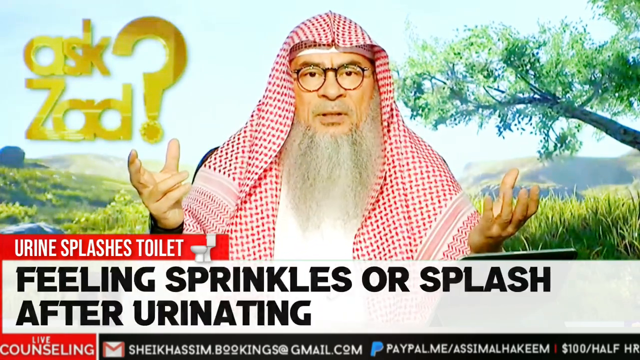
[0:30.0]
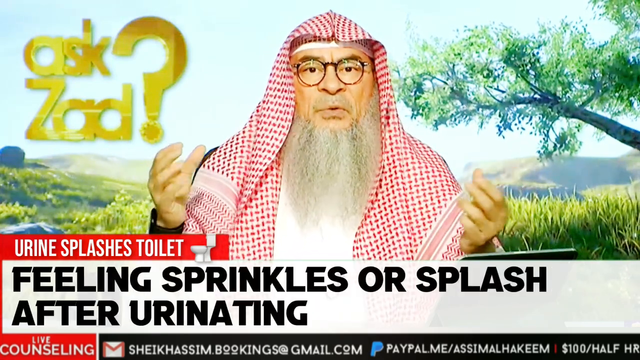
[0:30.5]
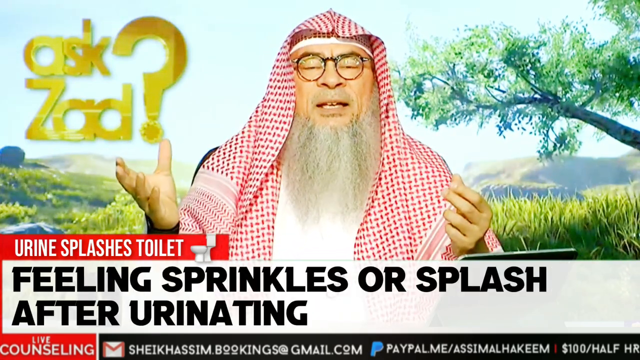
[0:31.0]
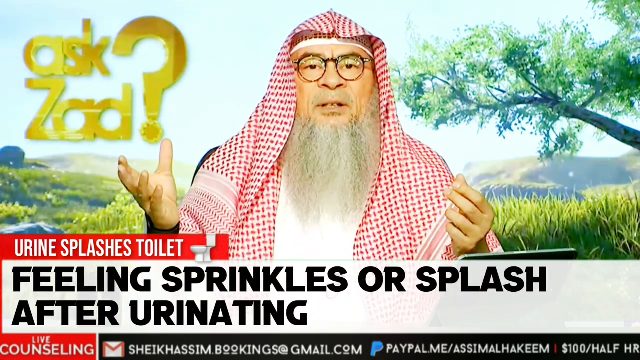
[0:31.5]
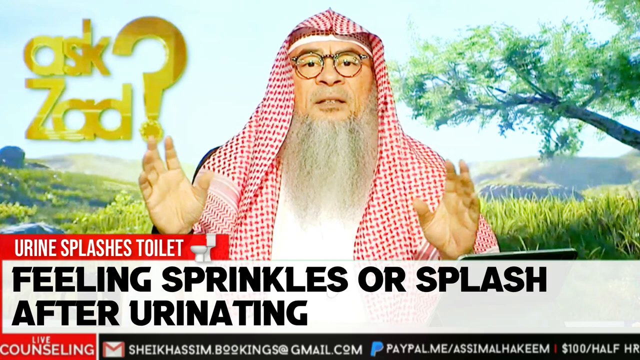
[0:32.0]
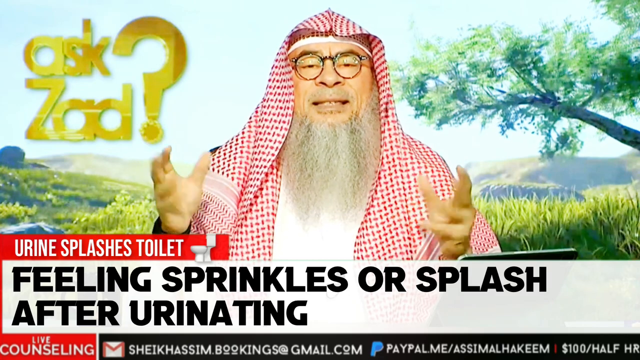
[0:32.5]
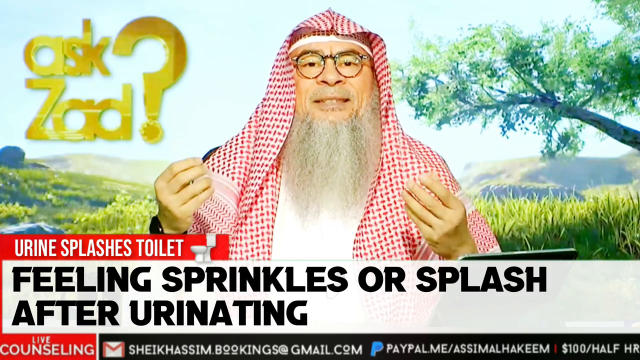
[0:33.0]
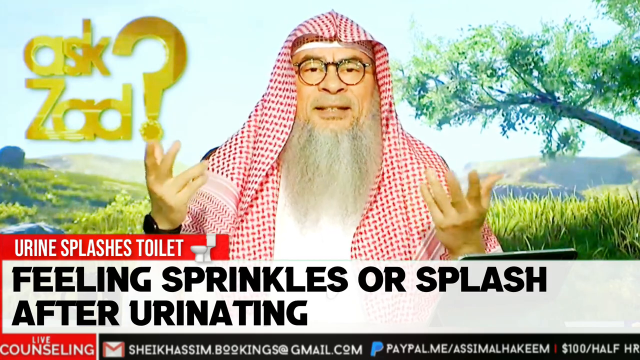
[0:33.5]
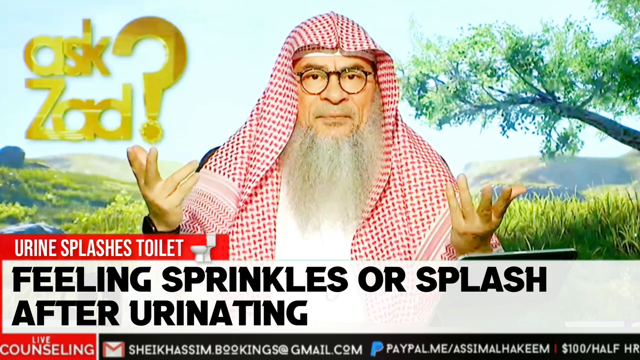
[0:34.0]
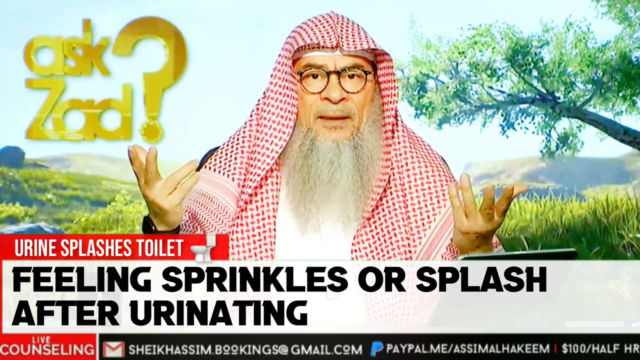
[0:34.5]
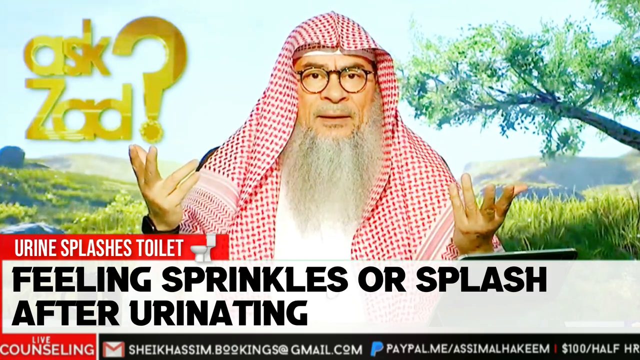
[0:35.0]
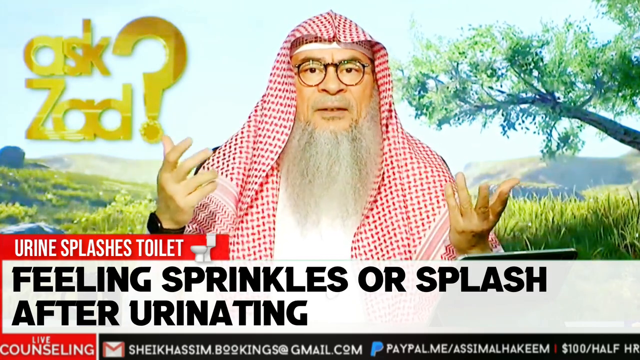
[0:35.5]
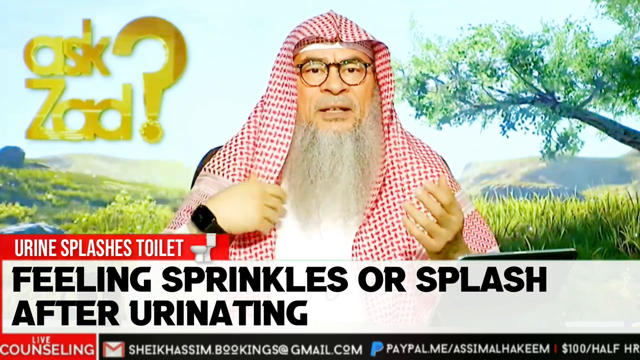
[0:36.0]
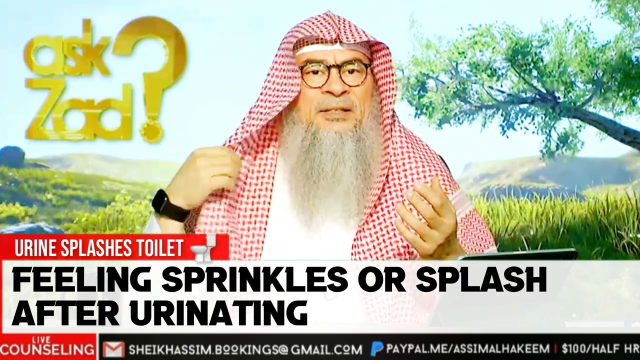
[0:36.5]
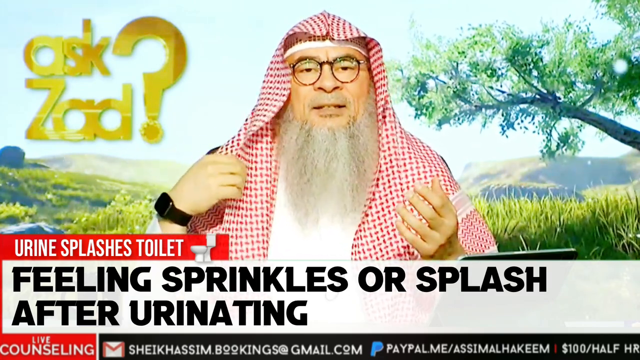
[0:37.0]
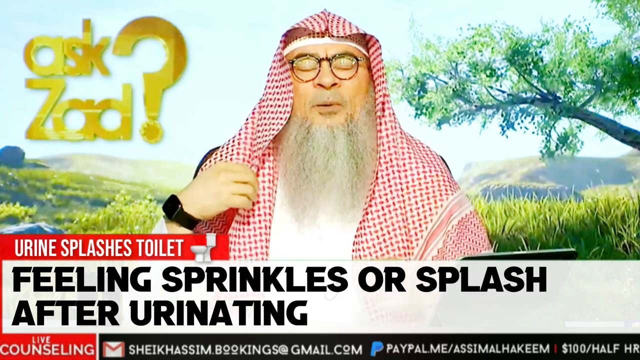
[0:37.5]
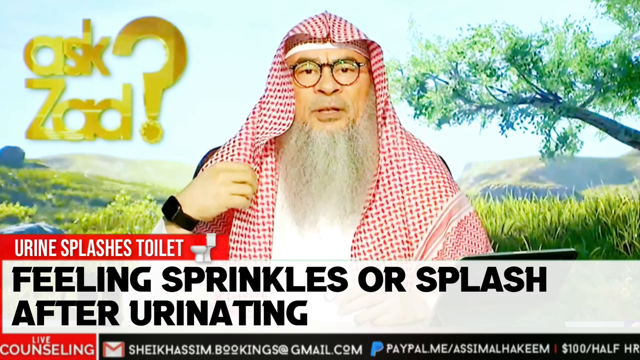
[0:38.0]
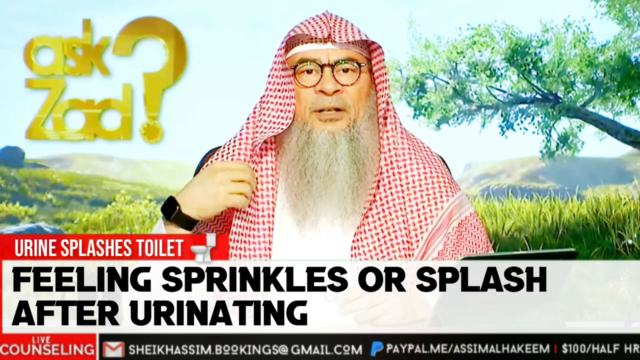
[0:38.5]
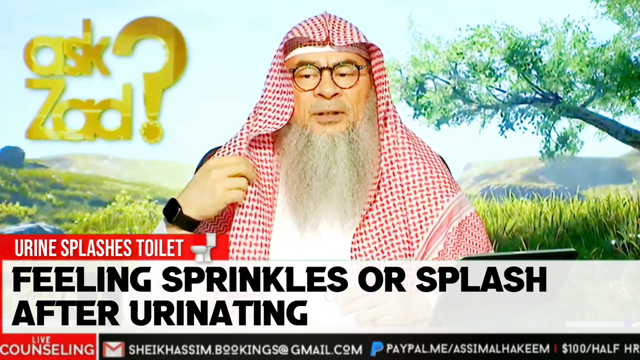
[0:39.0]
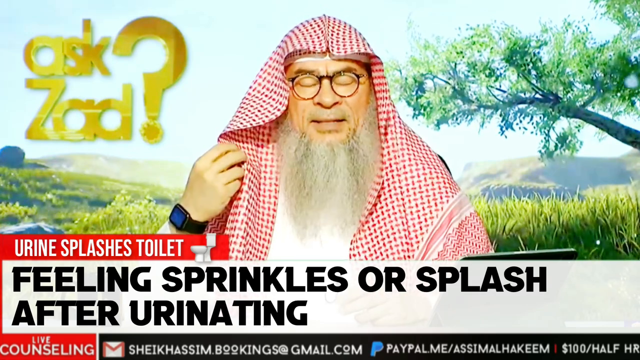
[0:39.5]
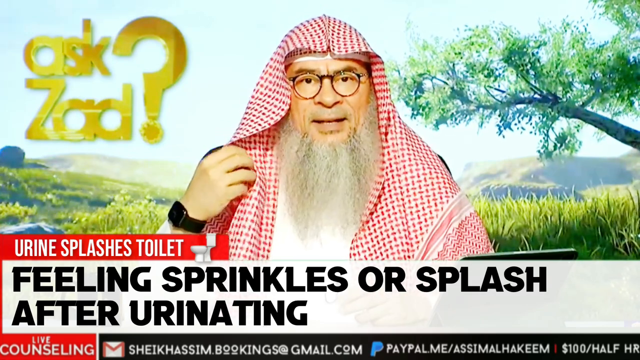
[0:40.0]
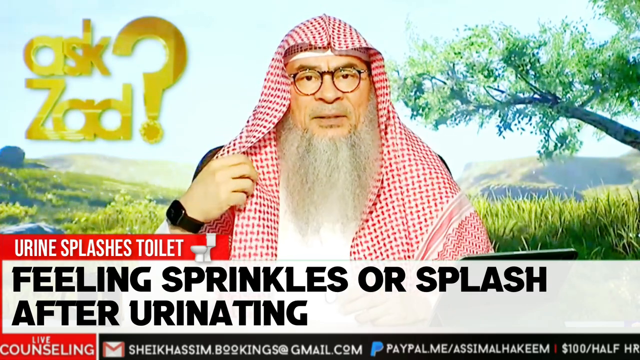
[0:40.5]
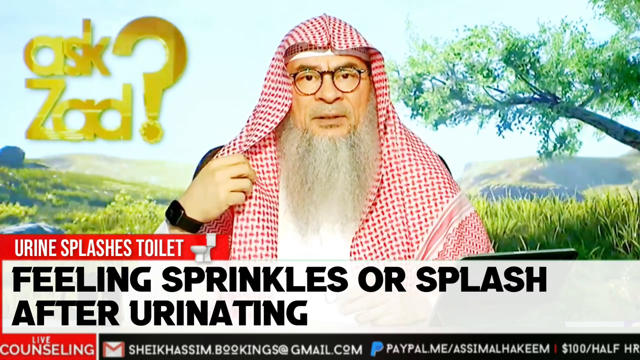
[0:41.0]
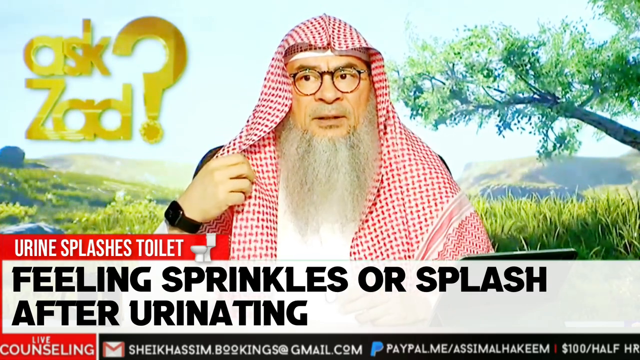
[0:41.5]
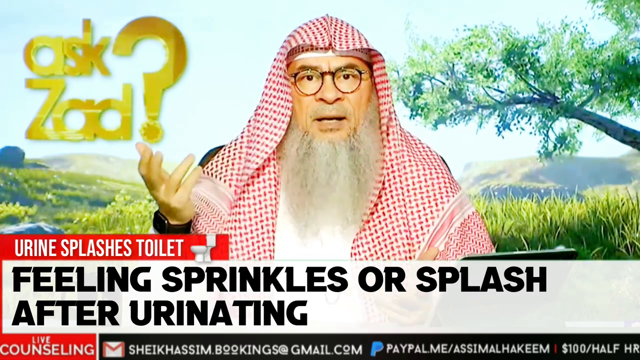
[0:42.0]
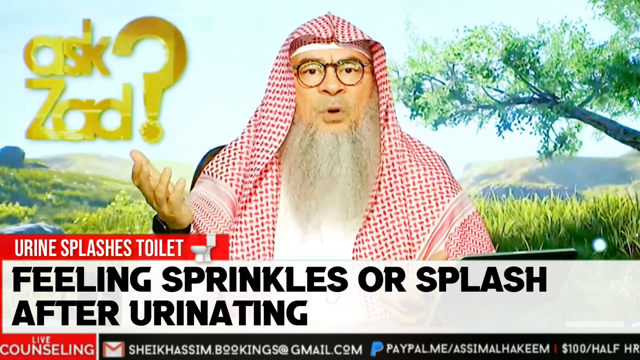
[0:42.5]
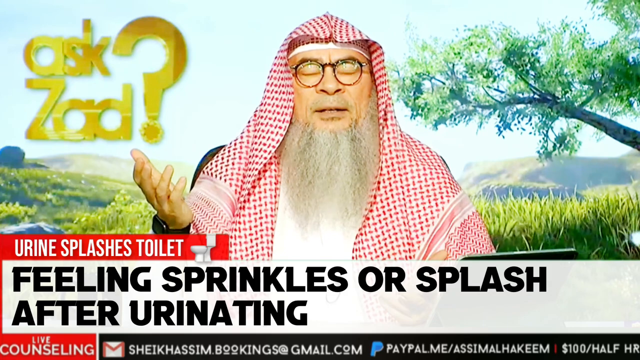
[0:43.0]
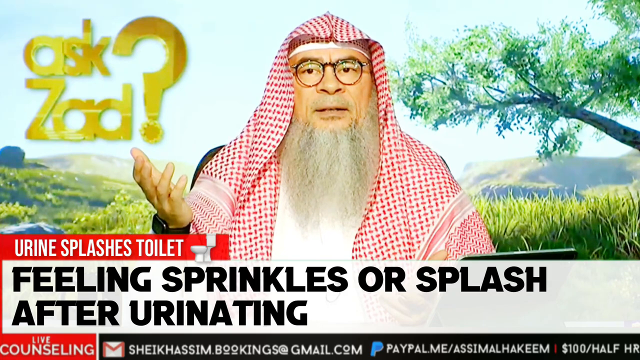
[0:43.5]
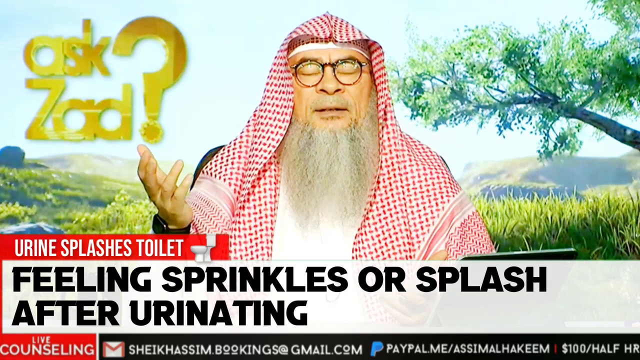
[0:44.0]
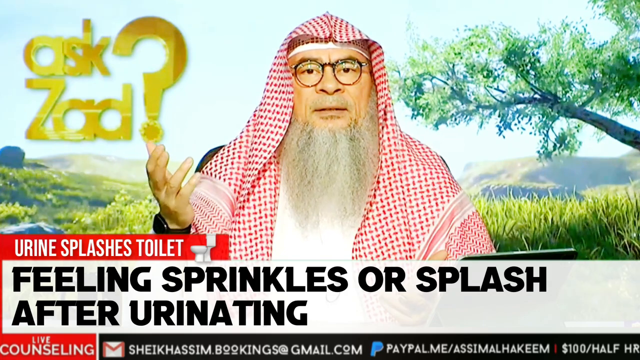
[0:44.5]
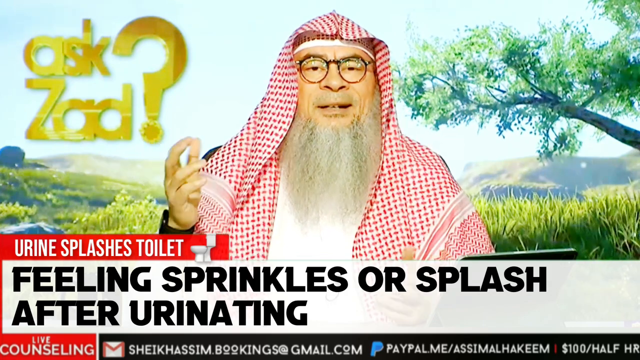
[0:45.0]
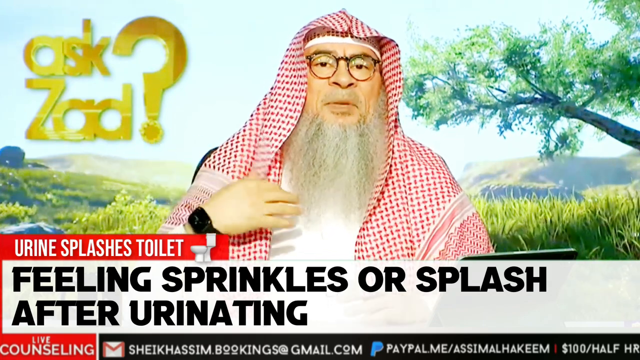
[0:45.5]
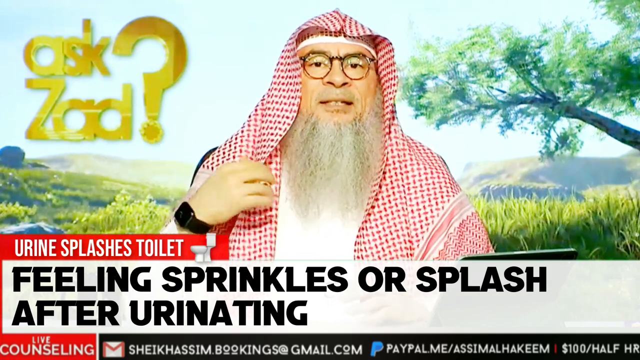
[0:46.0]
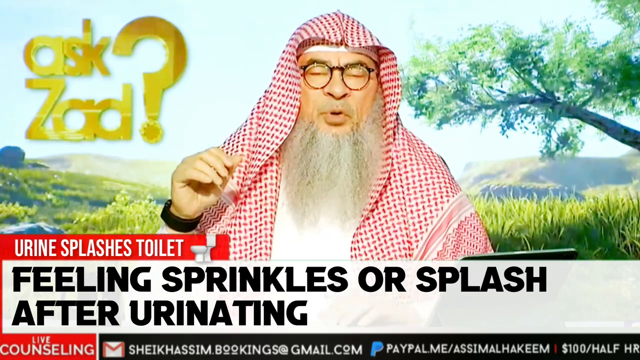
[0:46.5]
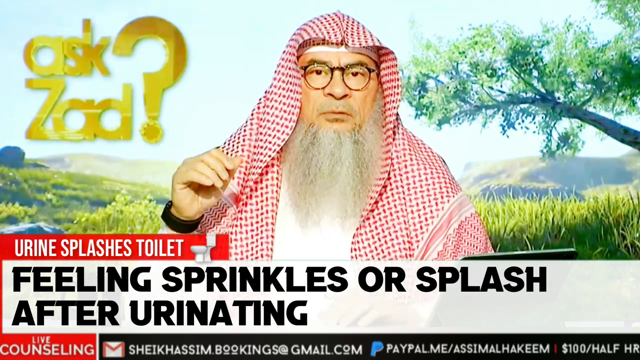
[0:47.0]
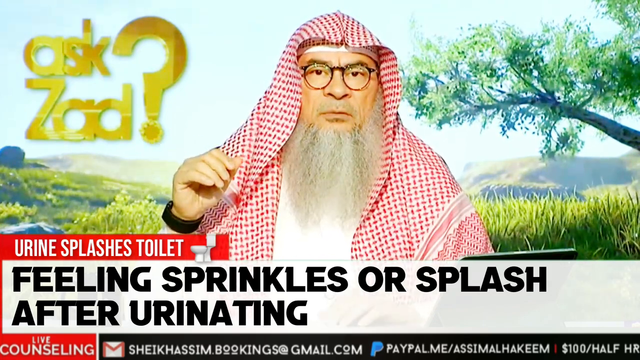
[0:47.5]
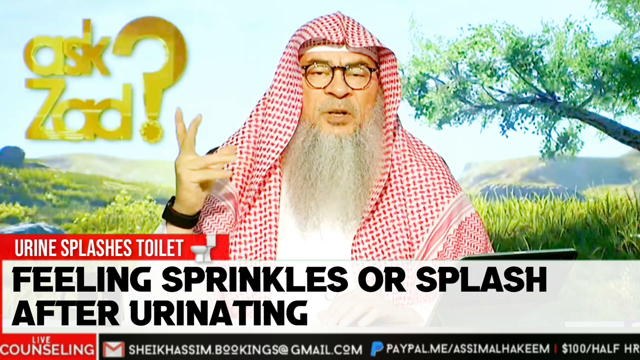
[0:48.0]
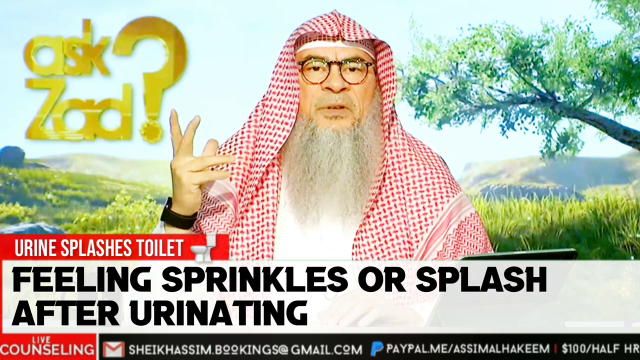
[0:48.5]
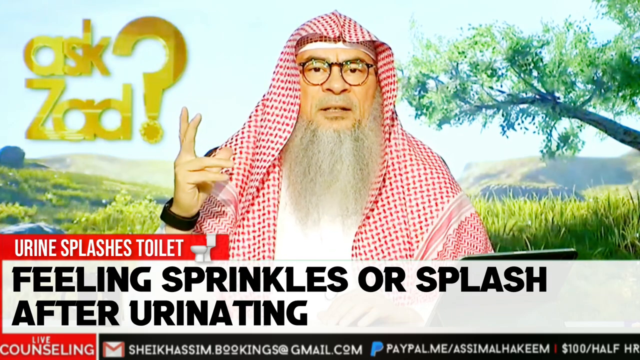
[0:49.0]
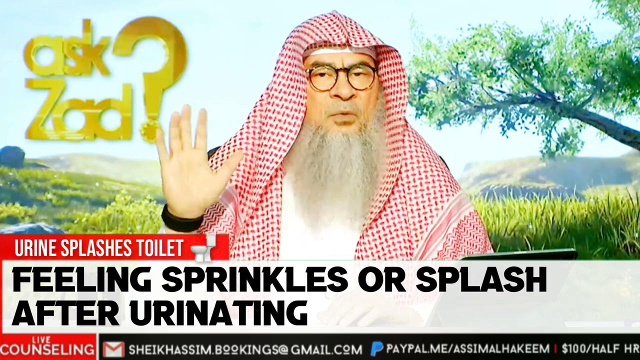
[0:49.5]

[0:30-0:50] The Sheik is talking. He has round-rimmed glasses, holds both hands up, and wears a black wristwatch. His beard goes down quite a bit, probably four to five inches long. He tugs on one side of his head covering and talks as if explaining something, with small head nods and hand gestures. The "ask Zad" sign is visible closer up; it is gold with a mirror reflection. The background is an image rather than real, and it is very bright, so it looks as though he is sitting in the sun. The caption shows up again at the bottom of the screen: "The urine splashes toilet, feeling sprinkles or splash after urinating." The chair he is sitting on looks dark, with a little darkness visible at each corner. The edge of his head covering is like a scarf, with a kind of lace trim several inches from each end.